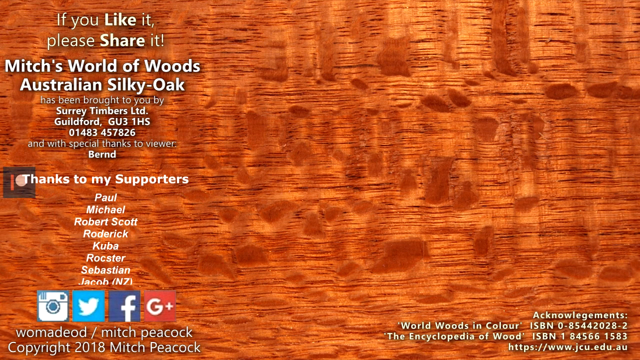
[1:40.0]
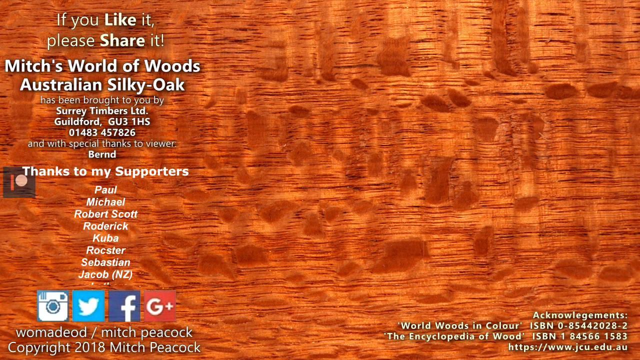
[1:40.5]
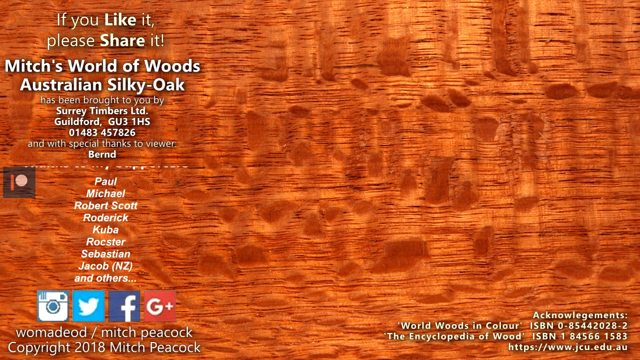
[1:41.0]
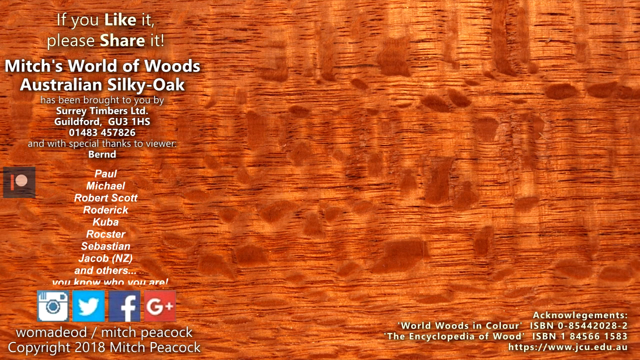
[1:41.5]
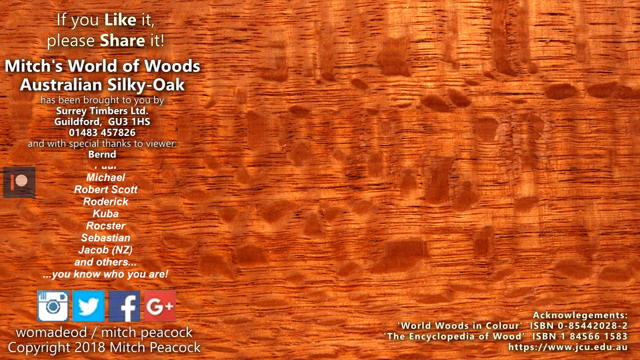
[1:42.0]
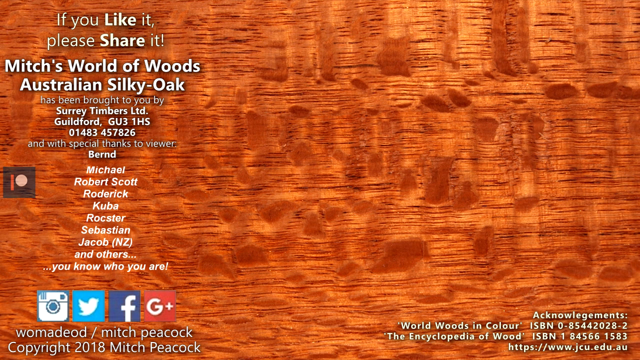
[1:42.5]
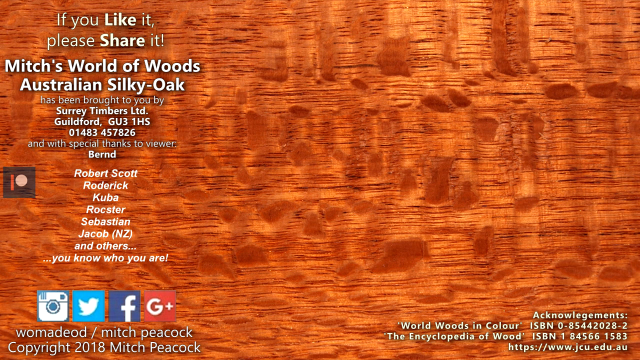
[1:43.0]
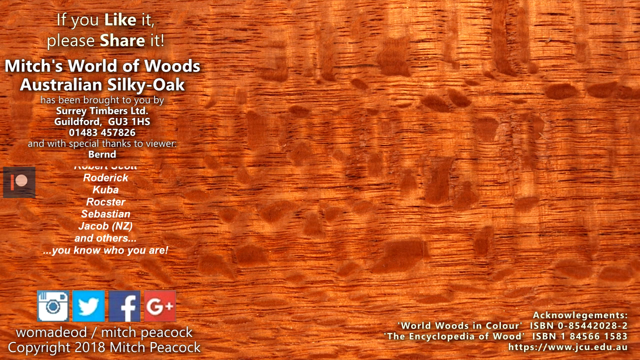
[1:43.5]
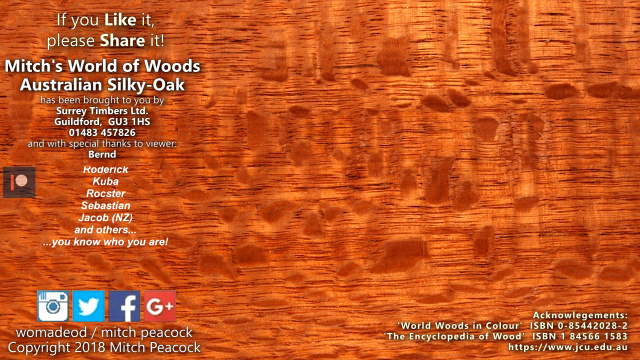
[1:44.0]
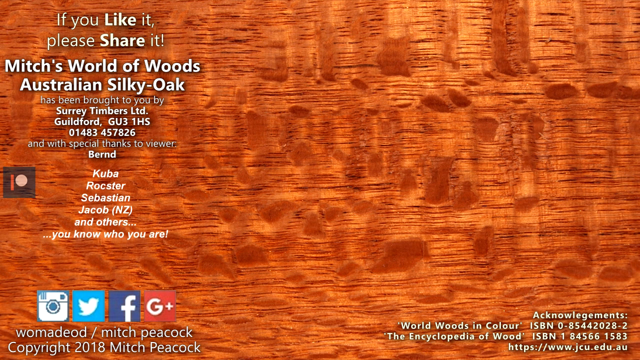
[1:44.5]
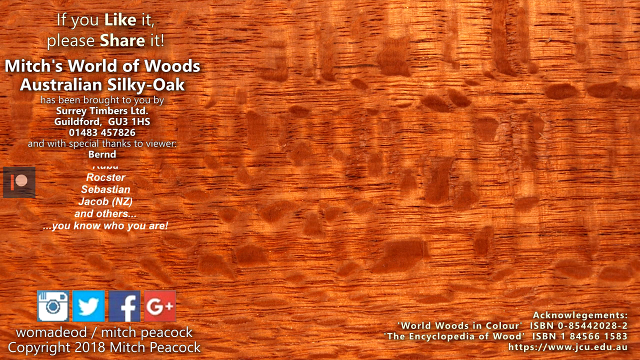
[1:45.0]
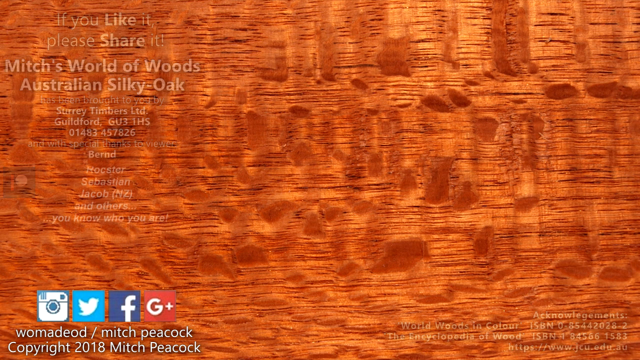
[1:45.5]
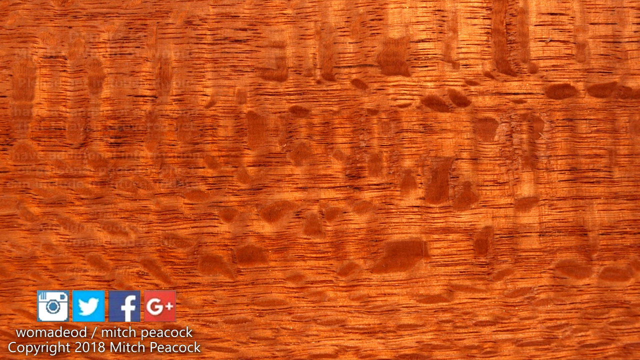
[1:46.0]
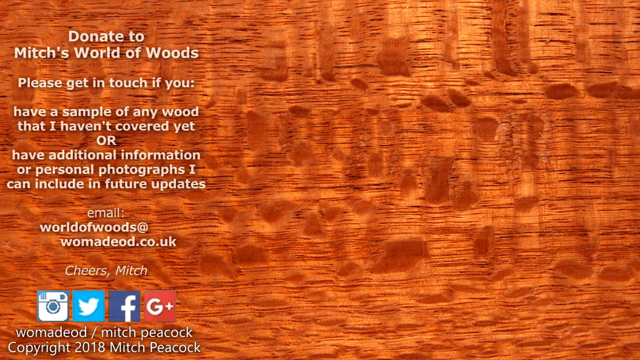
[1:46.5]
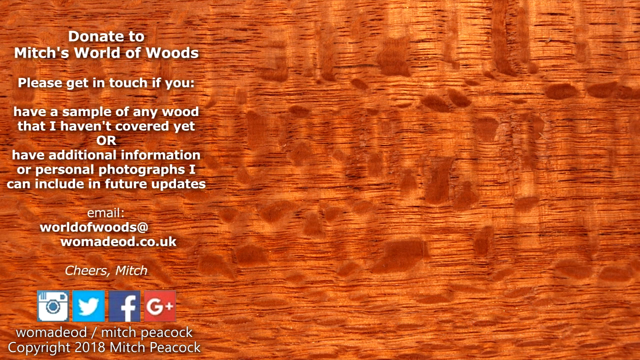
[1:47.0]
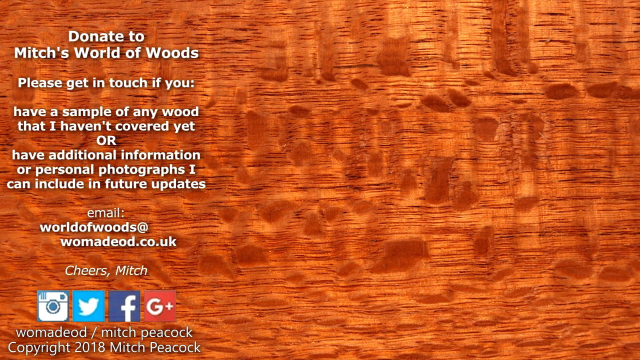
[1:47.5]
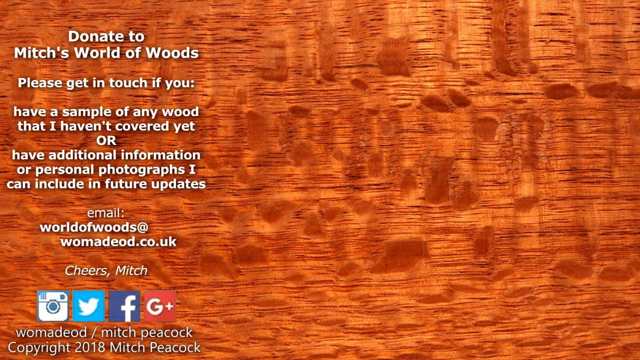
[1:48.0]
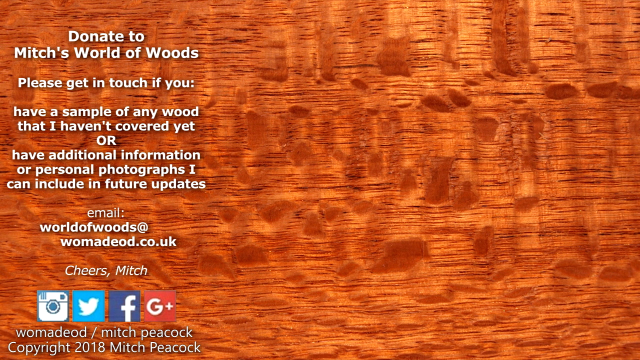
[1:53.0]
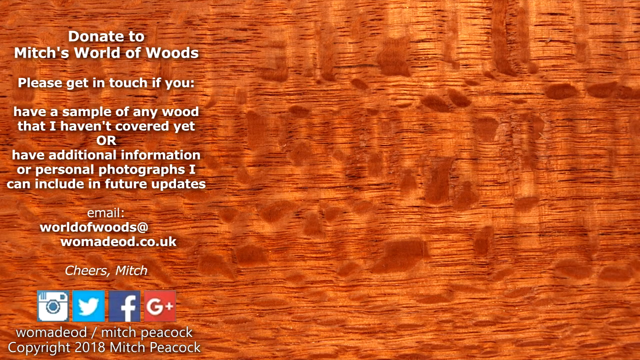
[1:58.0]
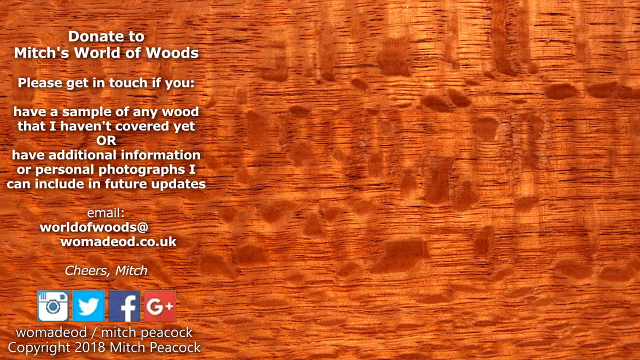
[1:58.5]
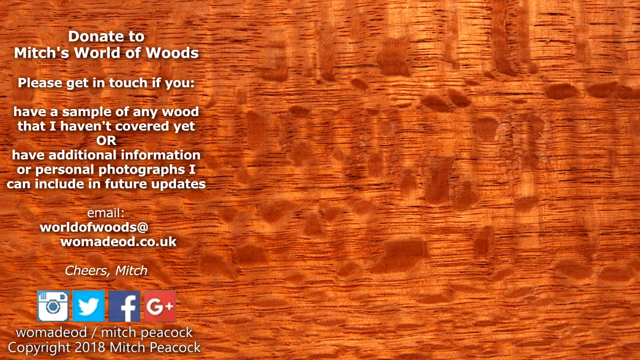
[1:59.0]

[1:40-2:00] The background looks like a brown piece of wood, with small white text on the left side. The upper left corner reads "if you like it please share it. Mitch's World of Woods Australian Silky Oak has been brought to you by Surrey Timbers Ltd Guildford GU31HS", followed by the phone number "01483 457826" and "and with special thanks to viewer Bernd". Underneath is "thanks to my supporters" with a scrolling list of supporters' names. In the bottom left are social media icons for Instagram, Twitter, Facebook and Google Plus, with username links underneath reading "Womadeod / Mitch Peacock", and a copyright "2018 Mitch Peacock". On the right side, acknowledgements list a few books and websites. The text on the left then fades away and more white text appears: "donate to Mitch's World of Woods. Please get in touch if you have a sample of any wood that I haven't covered yet or have additional information or personal photographs I can include in future updates." It gives the email address "worldofwoods@womadeod.co.uk" and is signed "Cheers, Mitch".